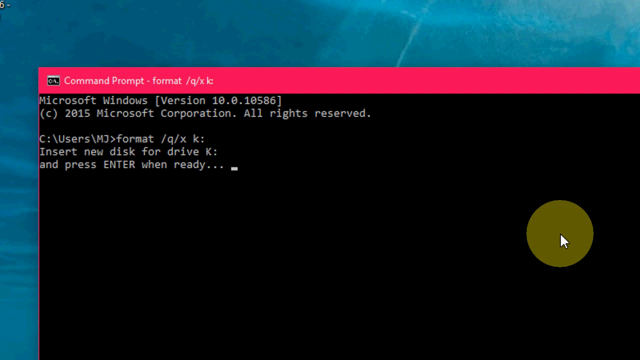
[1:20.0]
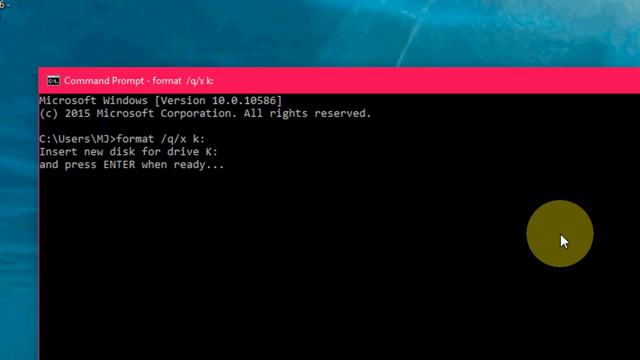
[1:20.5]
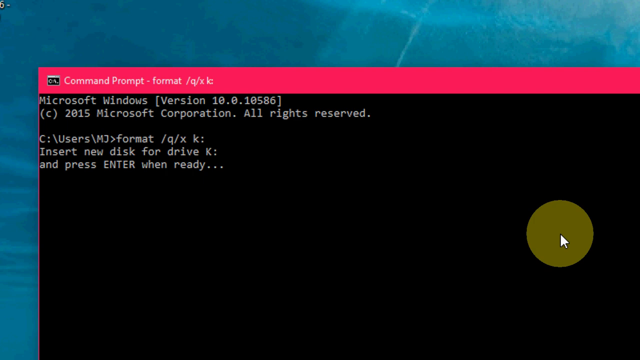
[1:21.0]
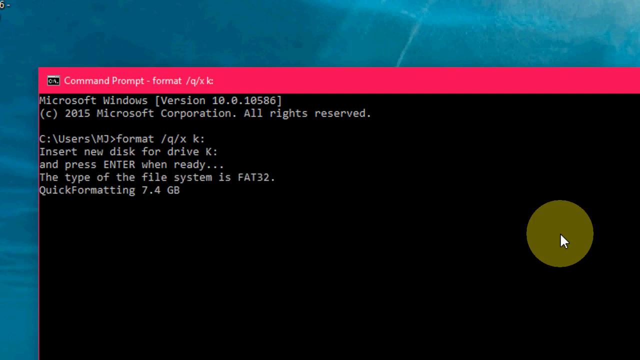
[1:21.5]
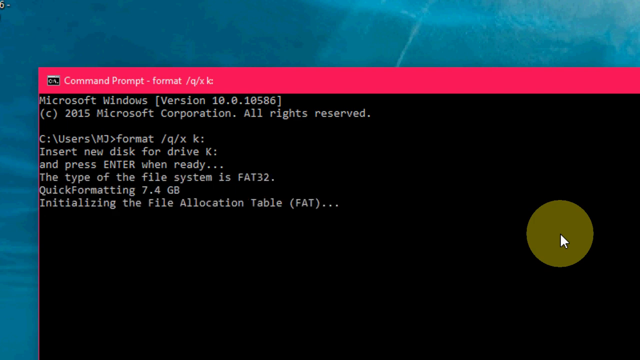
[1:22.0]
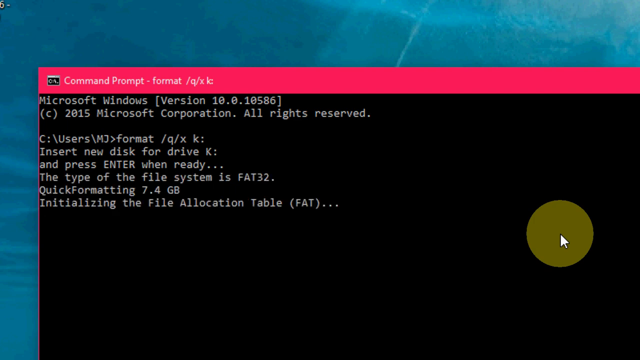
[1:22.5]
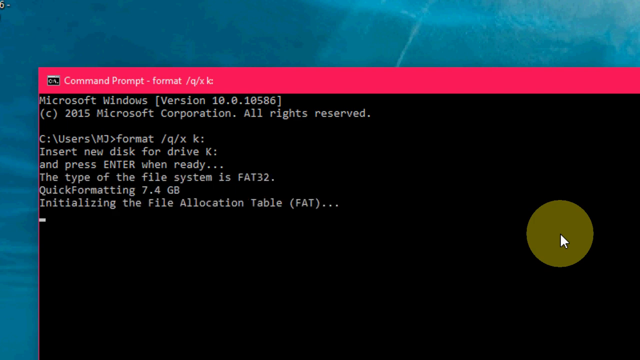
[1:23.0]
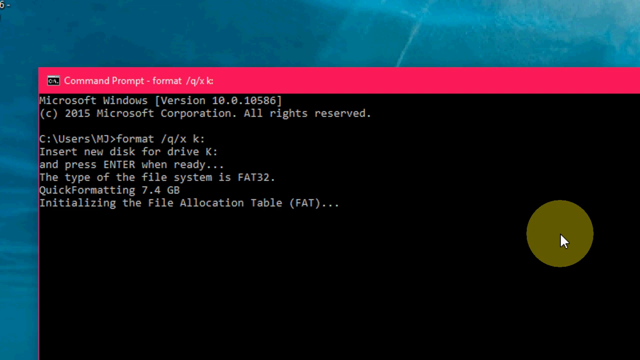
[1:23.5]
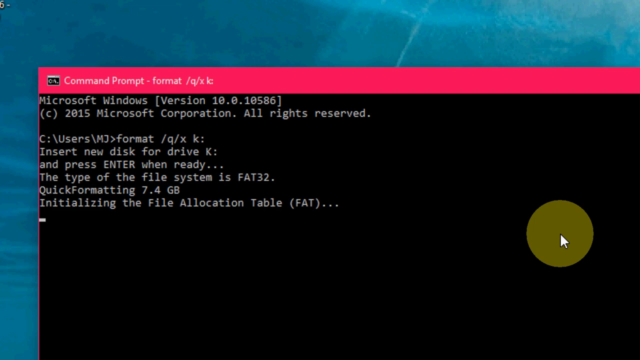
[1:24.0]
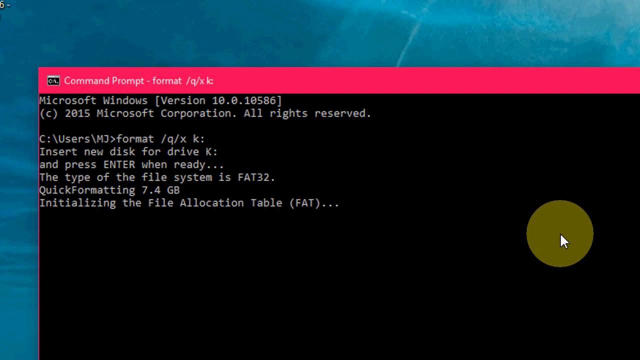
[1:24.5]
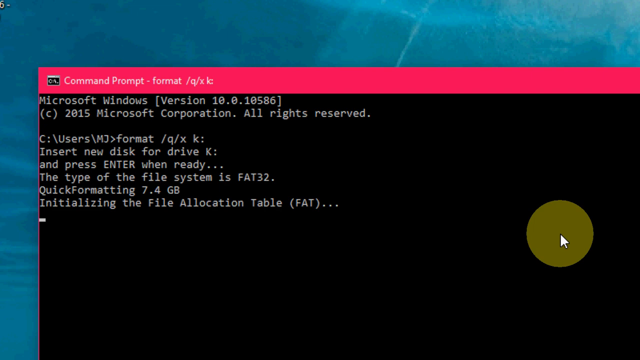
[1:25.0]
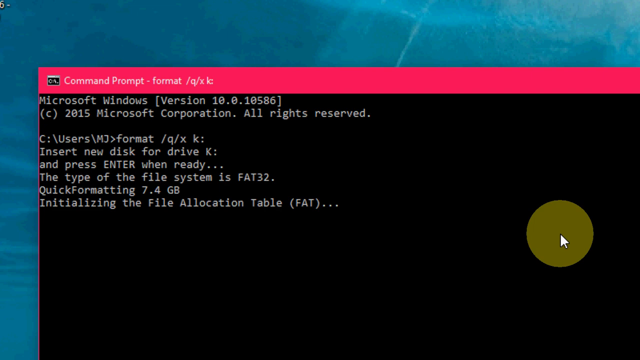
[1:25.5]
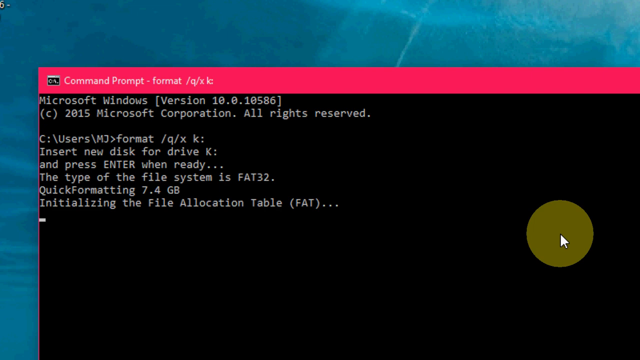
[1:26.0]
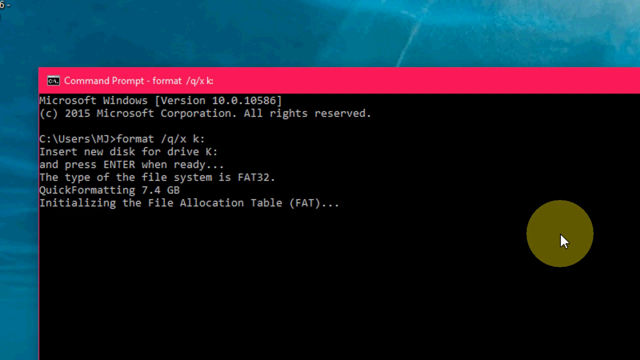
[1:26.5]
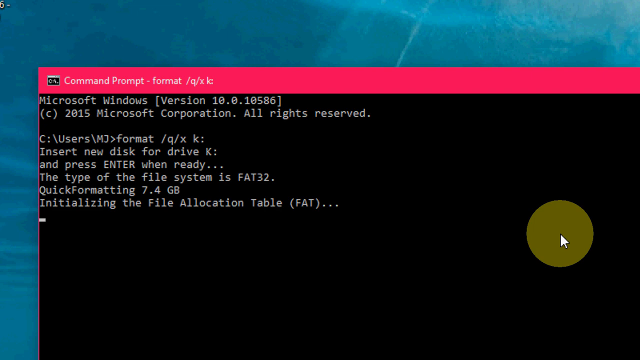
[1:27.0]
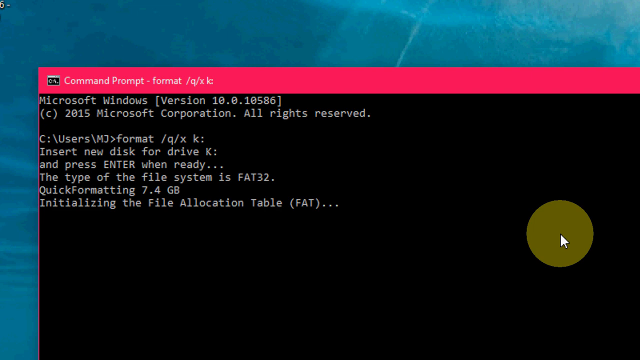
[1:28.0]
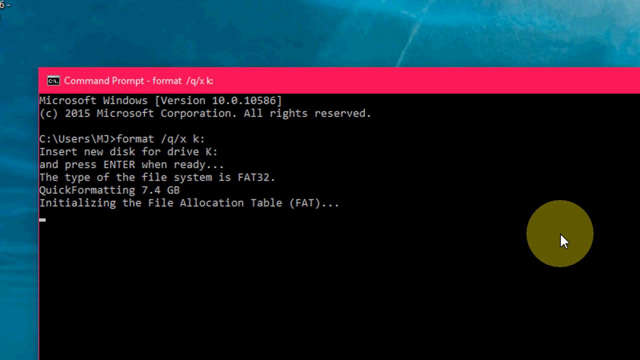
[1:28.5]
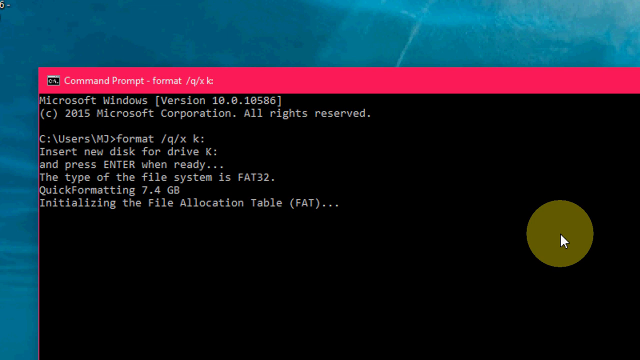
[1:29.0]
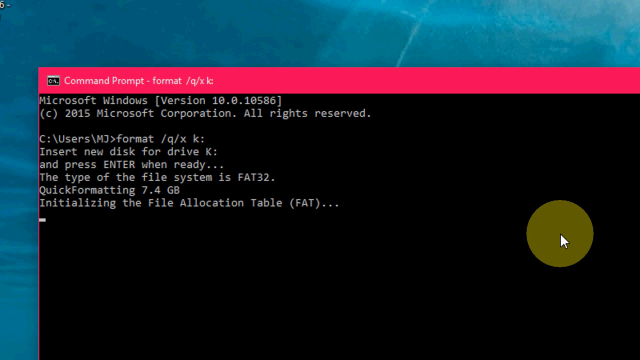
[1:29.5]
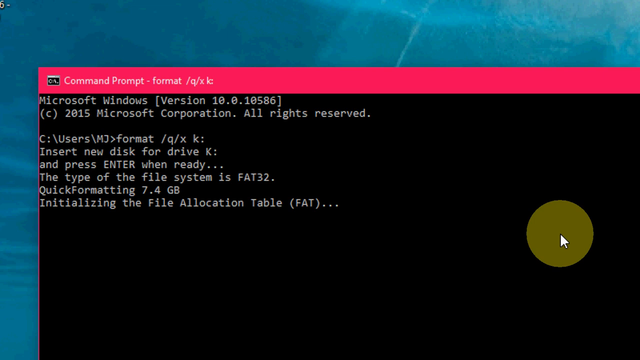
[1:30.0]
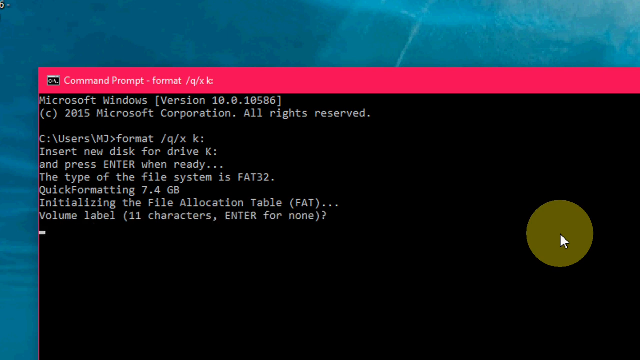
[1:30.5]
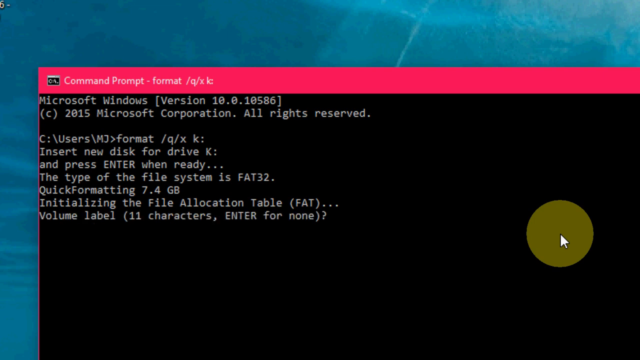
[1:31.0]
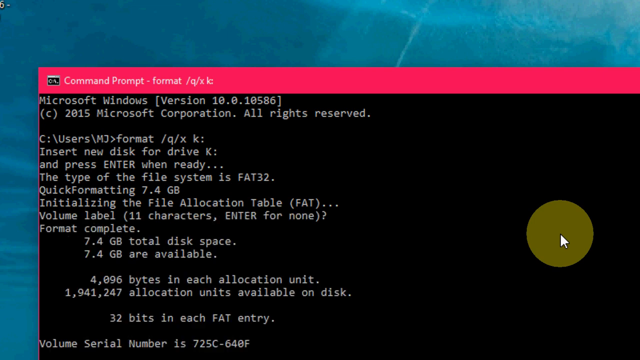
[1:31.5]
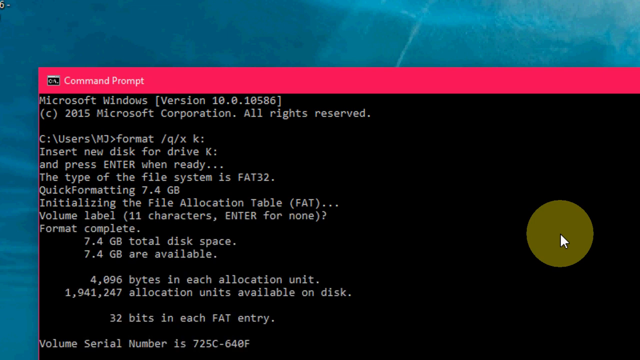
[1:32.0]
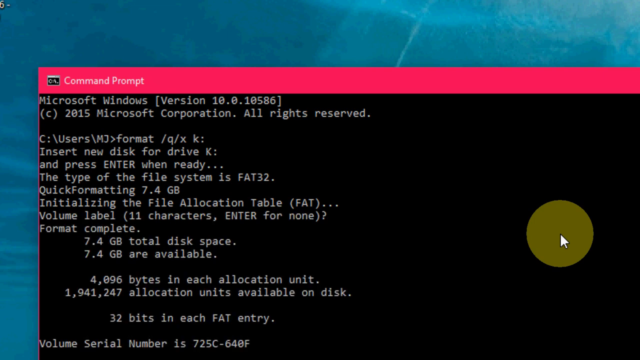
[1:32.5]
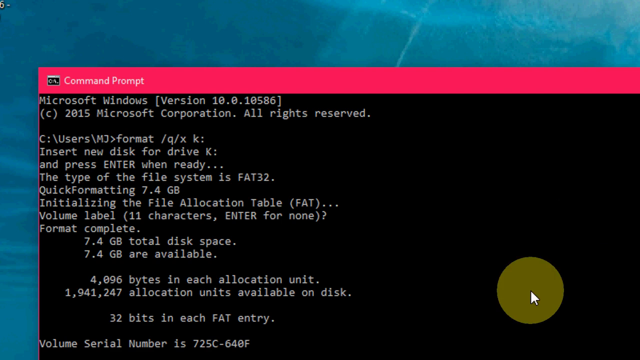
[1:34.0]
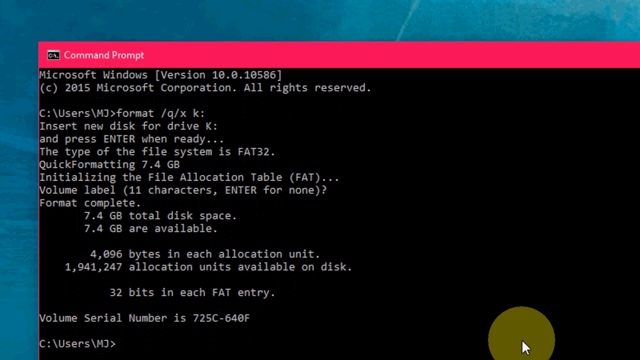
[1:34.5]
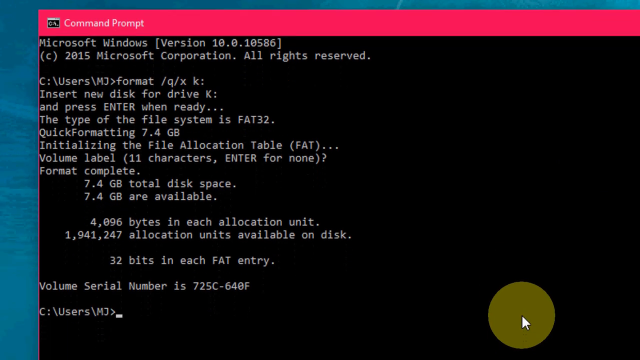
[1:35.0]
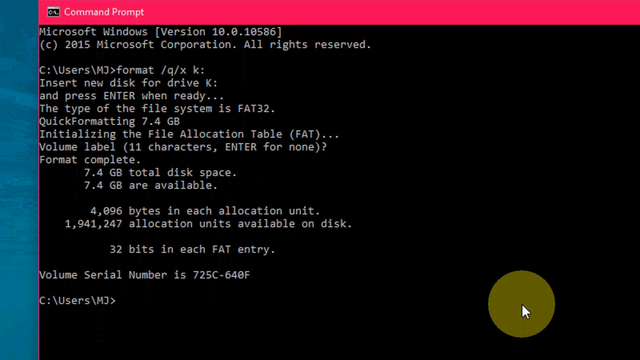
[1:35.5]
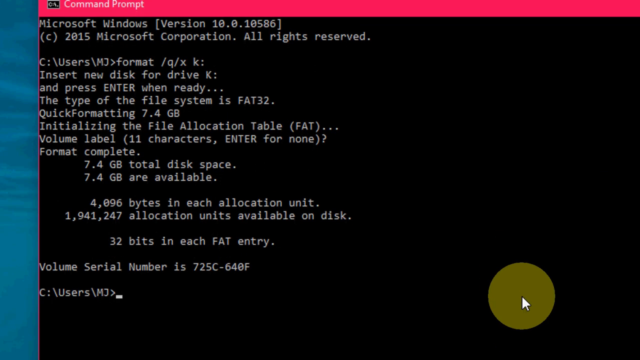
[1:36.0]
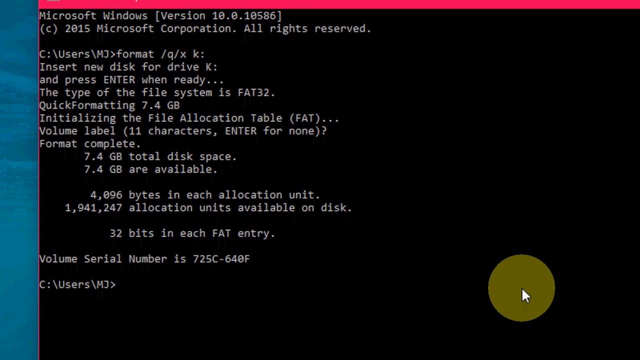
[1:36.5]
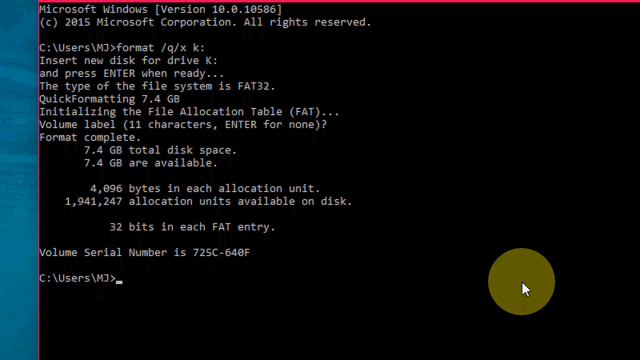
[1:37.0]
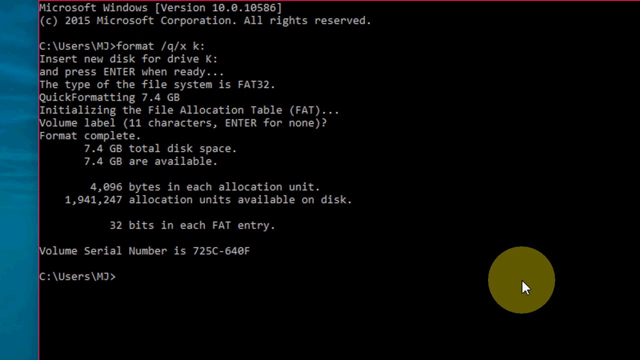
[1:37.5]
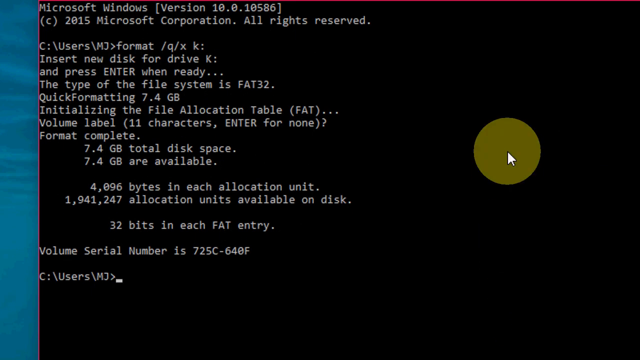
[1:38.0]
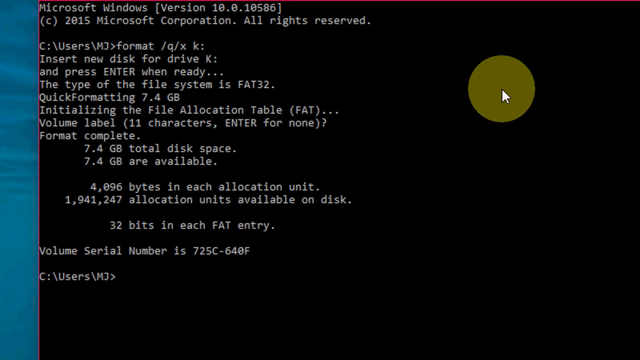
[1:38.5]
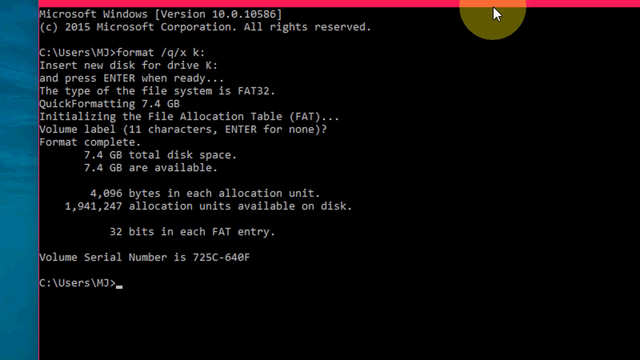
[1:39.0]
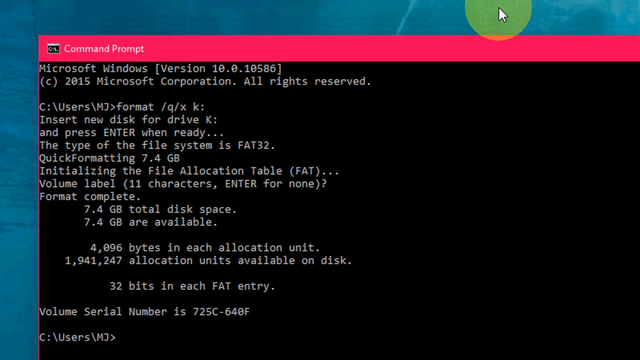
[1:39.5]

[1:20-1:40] The person remains in the Command Prompt with the format command using /q /x. After the prompt to insert a new disk for drive K and press Enter, Enter is pressed, and the output reports a FAT32 file system, quick formatting 7.4 gigabytes, initializing the file allocation table (FAT), a volume label of 11 characters with Enter for none, format complete, 7.4 gigabytes total disk space and 7.4 available. It then reads "4,096 bytes in each allocation unit", "1,941,247 allocation units available on disk", "32 bits in each FAT entry" and "Volume serial number is 7255C640F". A new prompt then appears at the bottom, ready for another command.